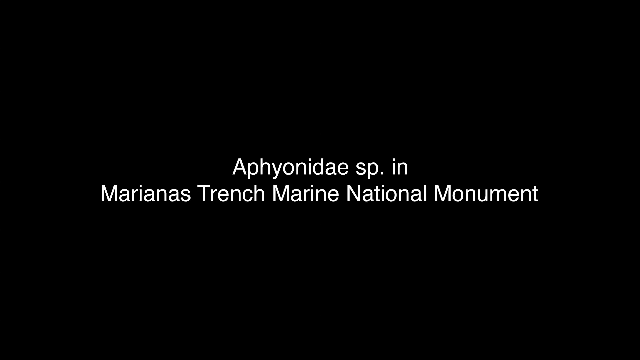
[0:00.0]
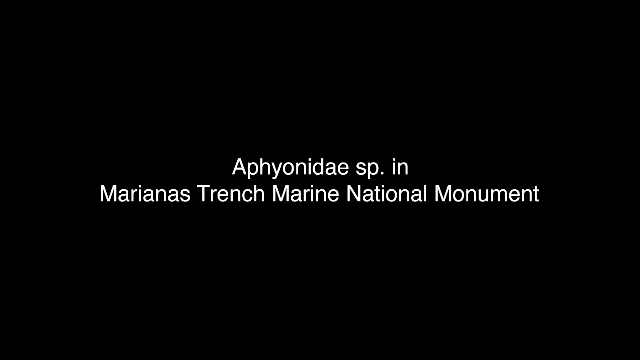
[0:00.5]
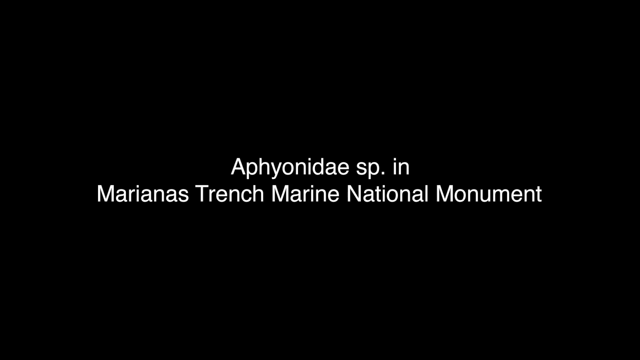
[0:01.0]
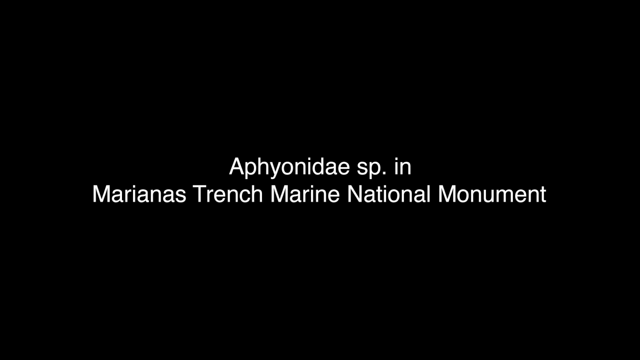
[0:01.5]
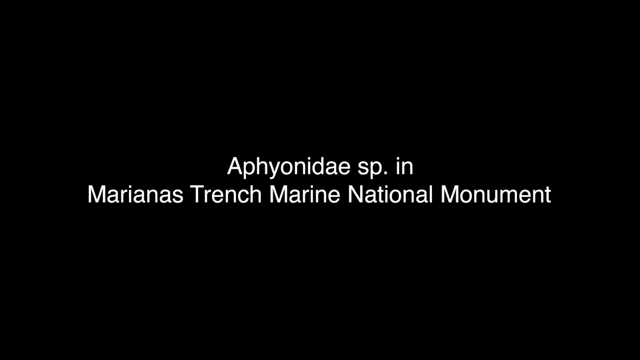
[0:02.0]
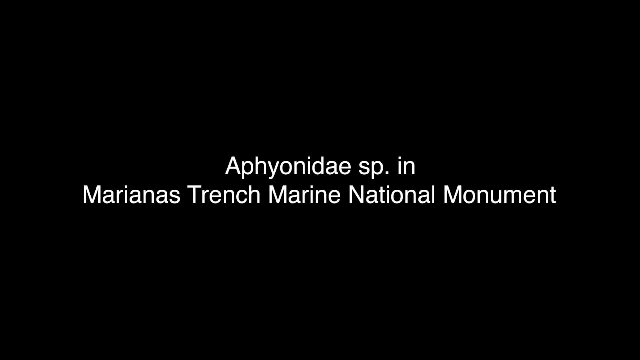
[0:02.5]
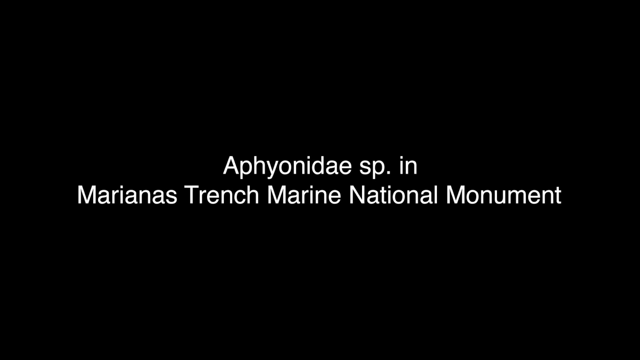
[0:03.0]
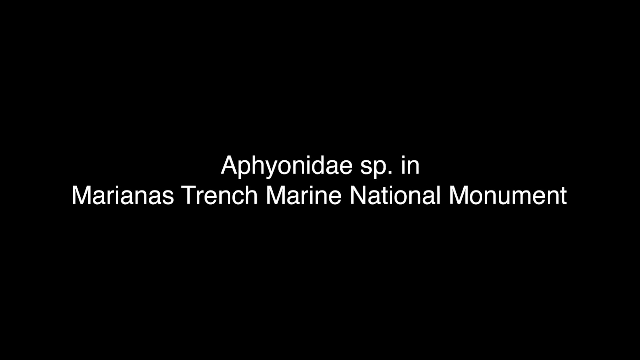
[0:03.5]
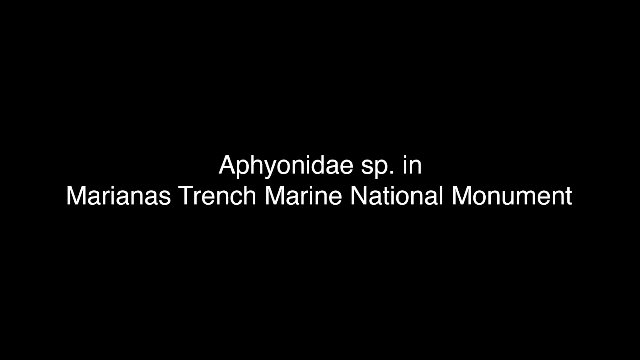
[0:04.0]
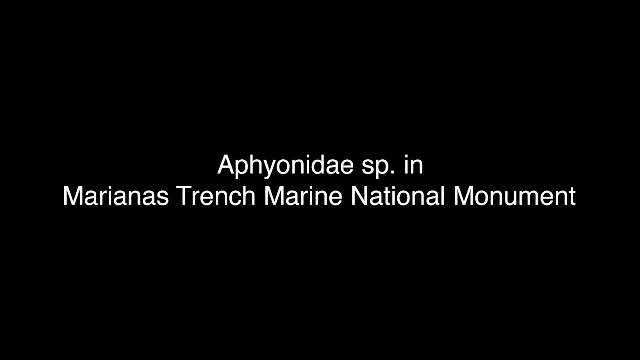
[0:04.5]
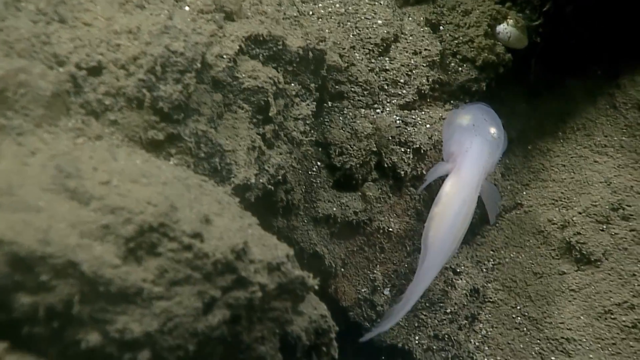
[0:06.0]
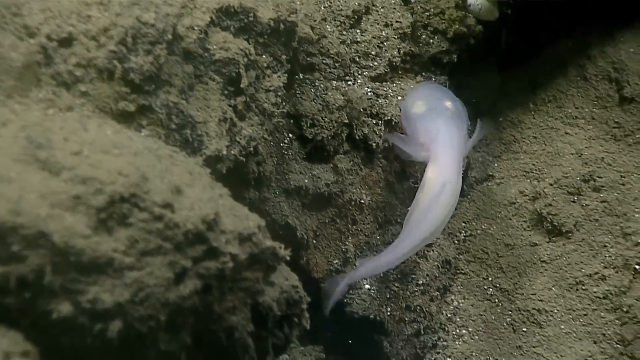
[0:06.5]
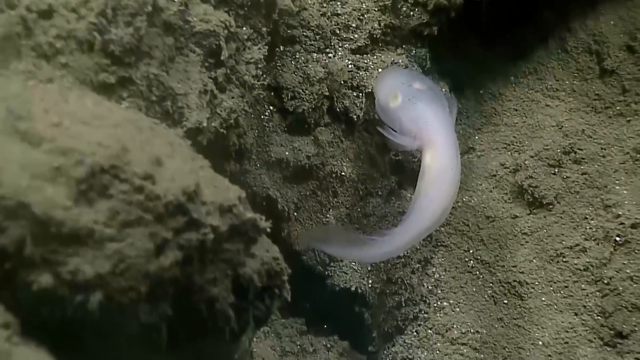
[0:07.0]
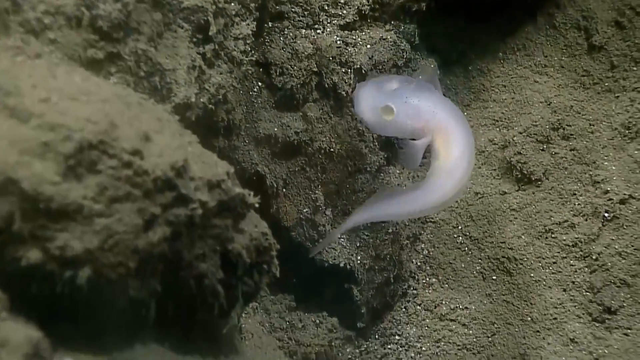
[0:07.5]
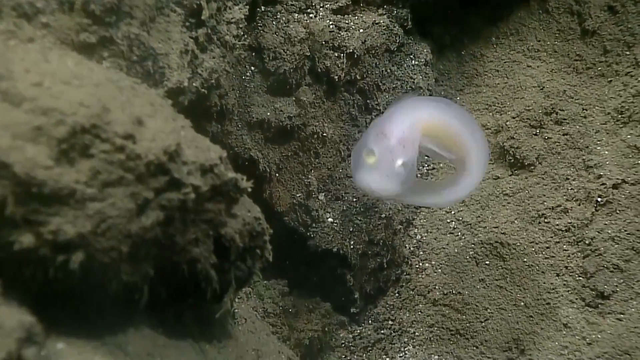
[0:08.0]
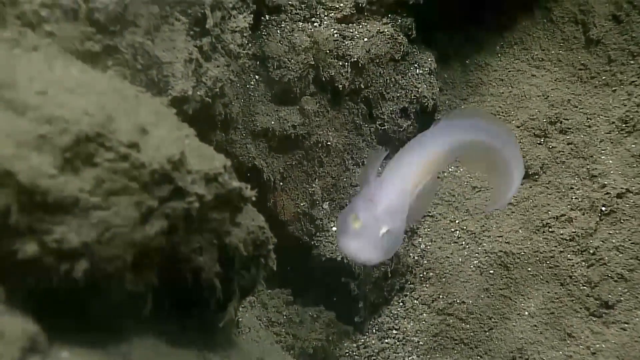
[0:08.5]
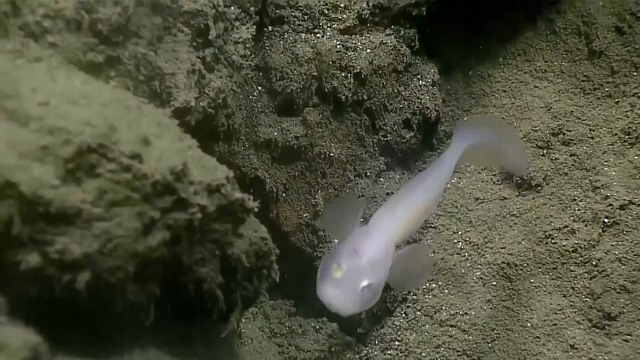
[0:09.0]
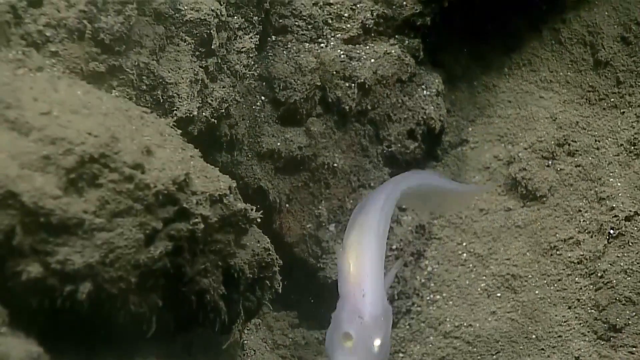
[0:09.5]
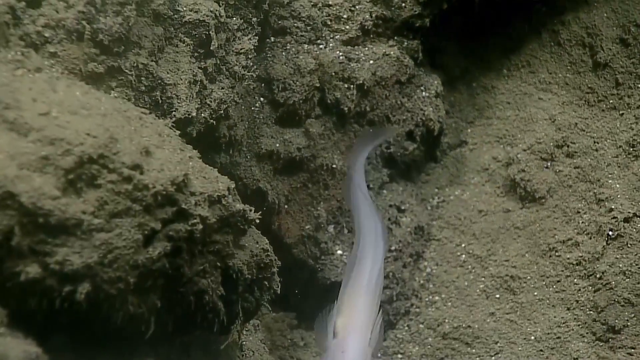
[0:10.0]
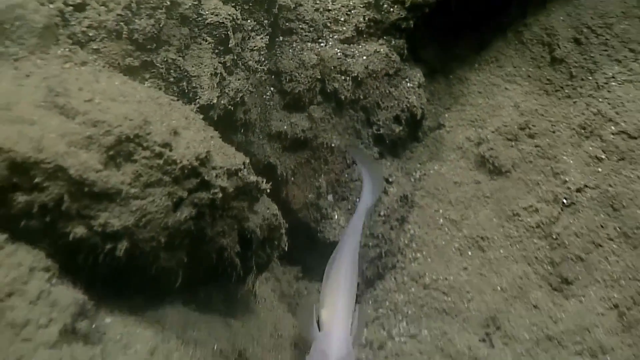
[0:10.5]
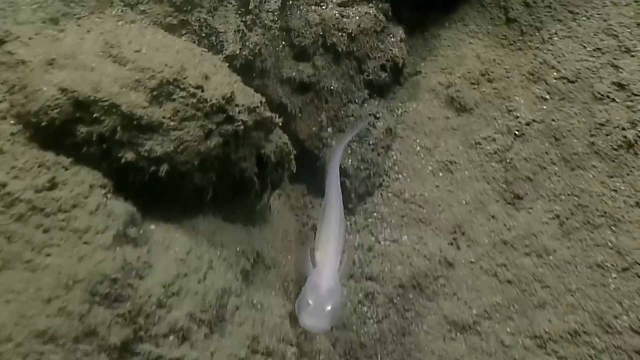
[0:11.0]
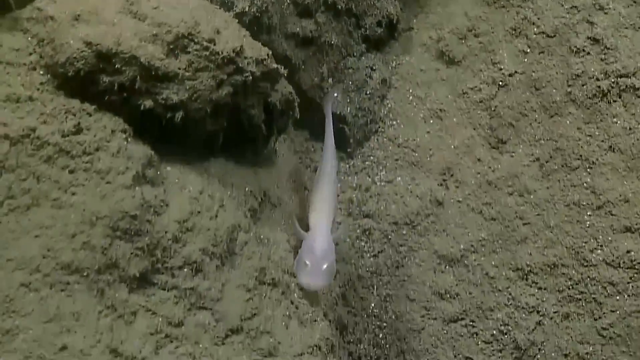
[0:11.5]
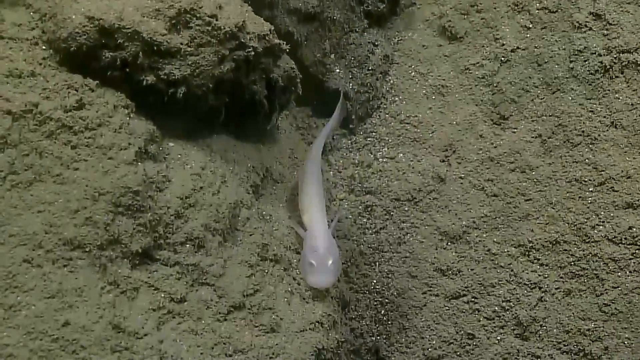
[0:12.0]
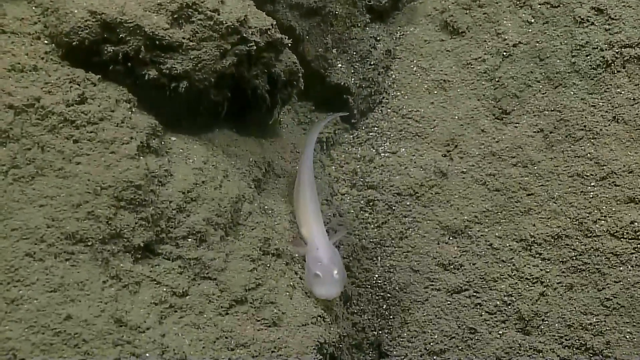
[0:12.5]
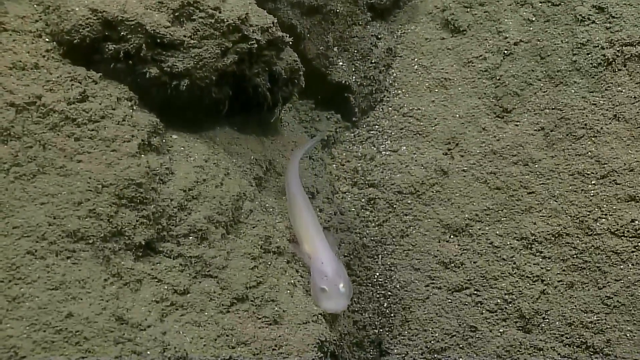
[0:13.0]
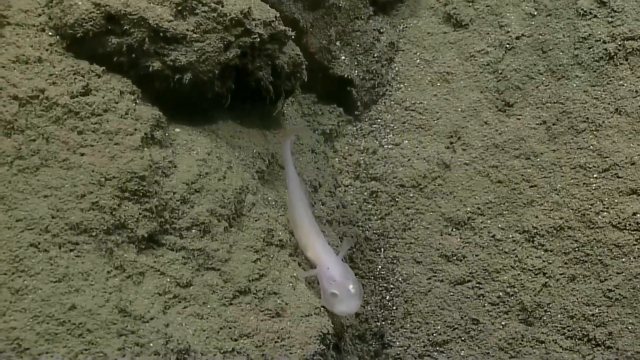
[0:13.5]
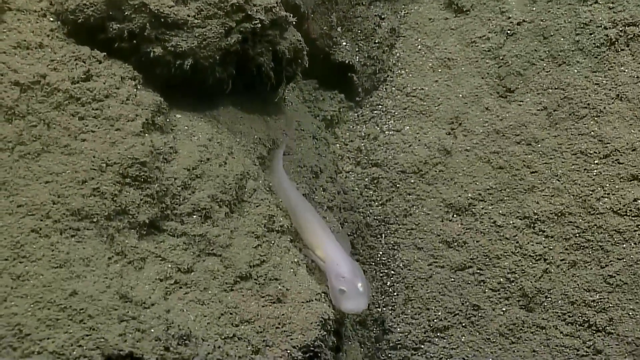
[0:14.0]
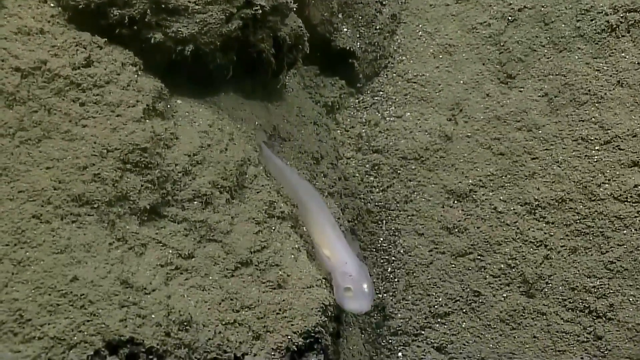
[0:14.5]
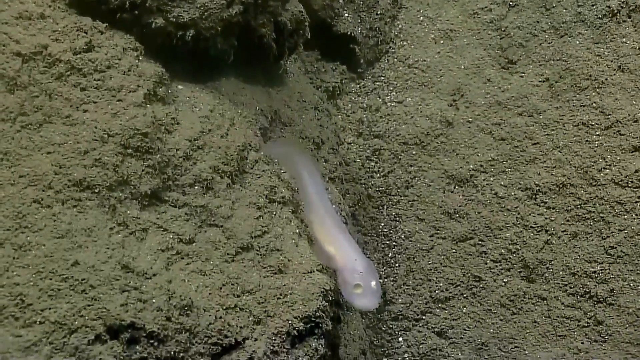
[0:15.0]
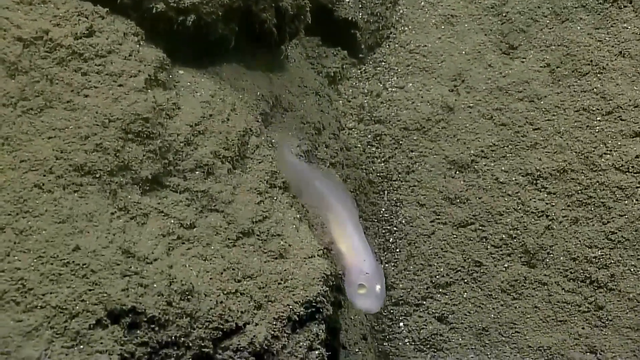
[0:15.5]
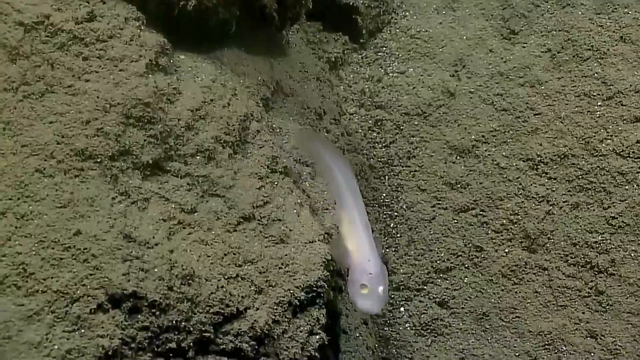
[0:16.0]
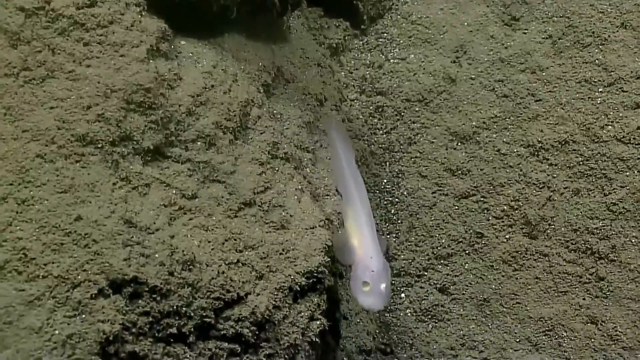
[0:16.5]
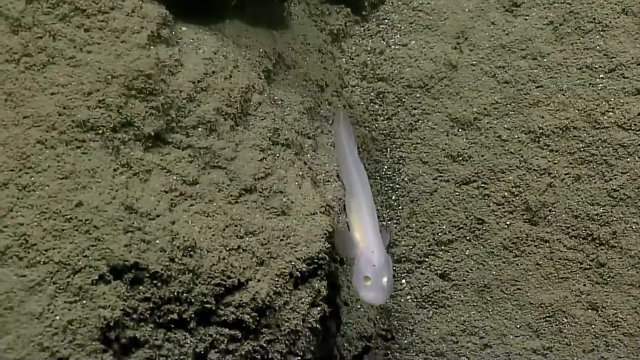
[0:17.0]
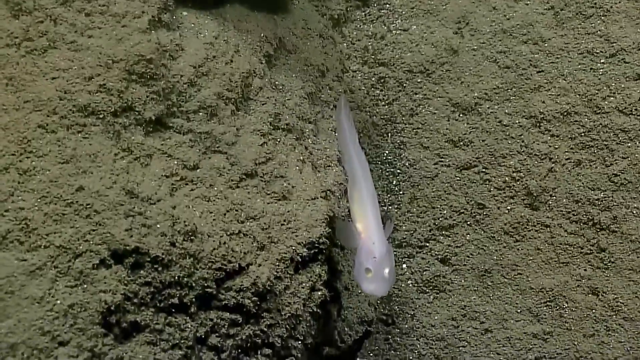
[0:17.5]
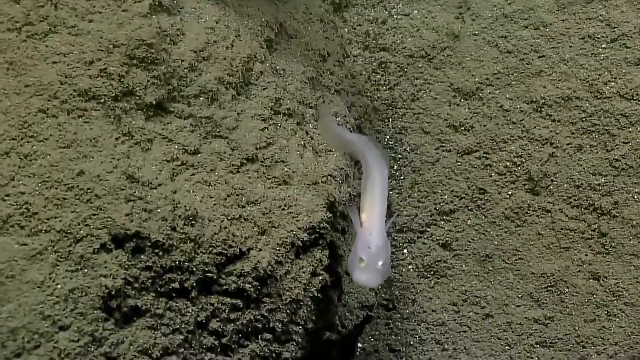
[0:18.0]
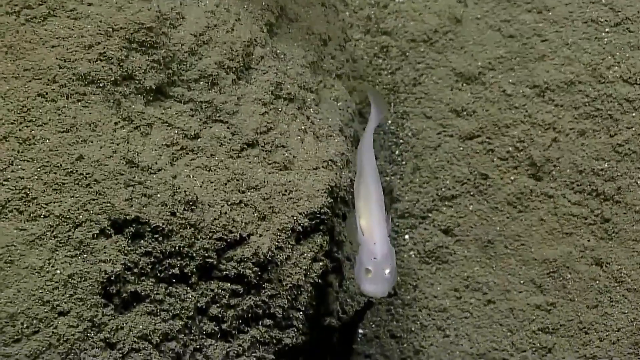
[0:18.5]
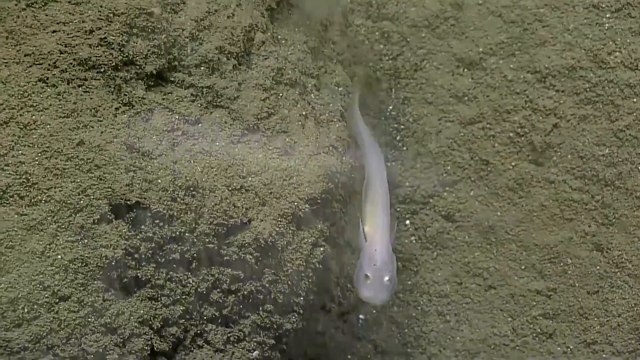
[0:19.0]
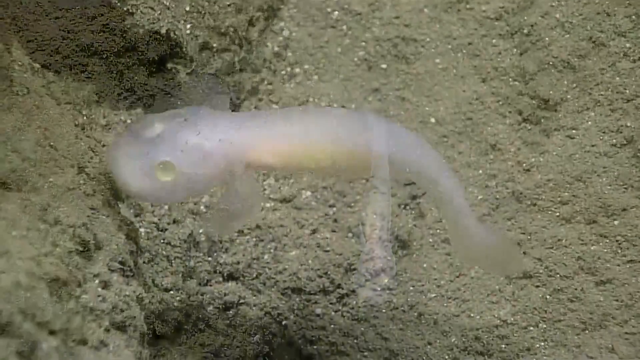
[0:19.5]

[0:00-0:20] A black screen shows the text "Aphyonidae SP" and "Mariana's Trench Marine National Monument." As the text grows larger, the video moves to an underwater scene deep in the ocean, with brown rock and sediment. Among the rock and sediment is a white, fish-like creature that almost resembles a tadpole. It has a large, white, round head and a long body that ends in a pointed tail, with two translucent fins on either side of its head. Two eyes are placed symmetrically on top of its head, and they almost seem to glow gold. The creature swims with its body undulating as it moves along a crack in the brown ocean floor. Its body is almost translucent; it is slightly pink at certain points and white elsewhere, and some parts inside the belly have an almost goldish-yellow, shimmering color.